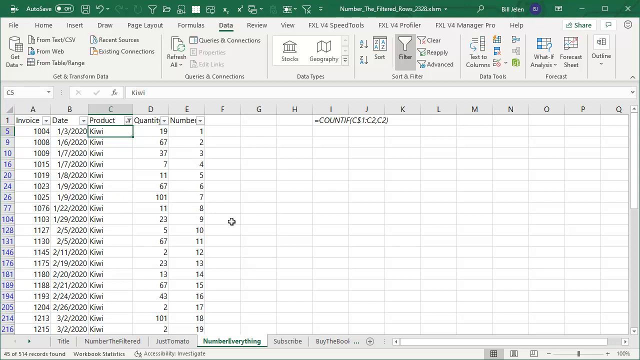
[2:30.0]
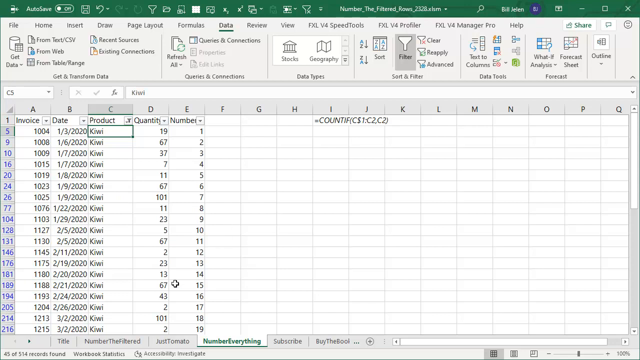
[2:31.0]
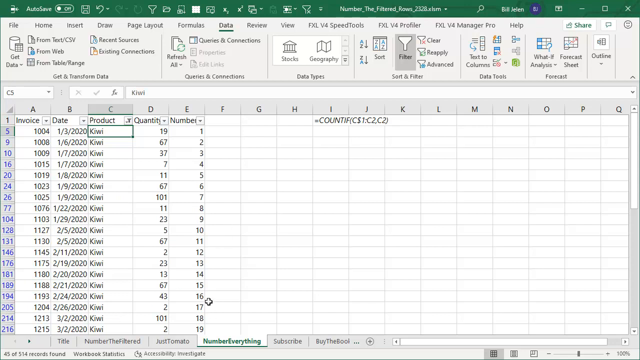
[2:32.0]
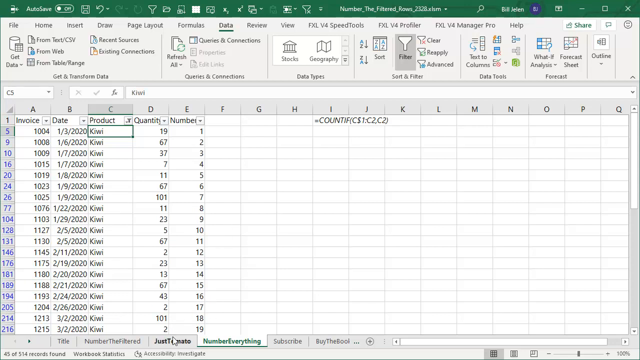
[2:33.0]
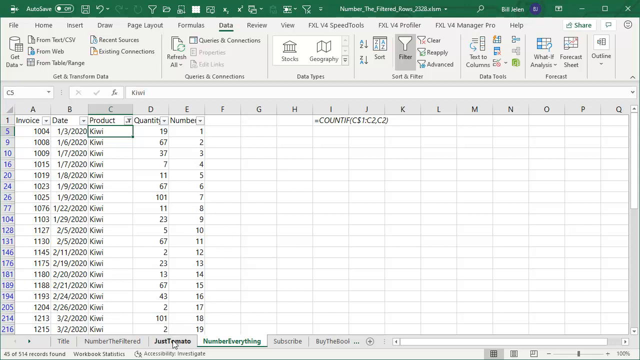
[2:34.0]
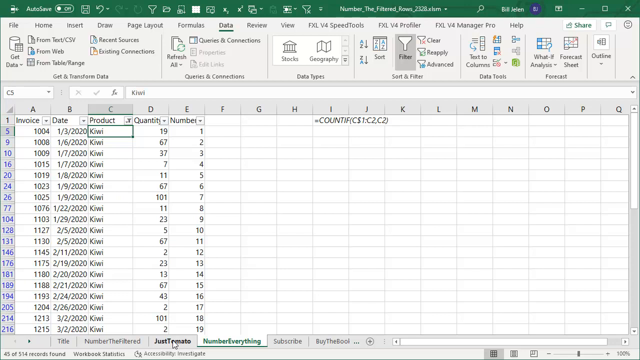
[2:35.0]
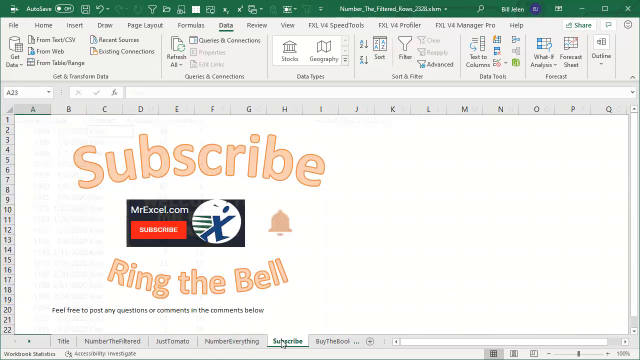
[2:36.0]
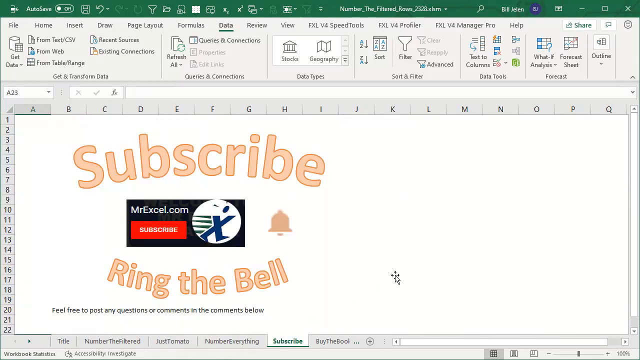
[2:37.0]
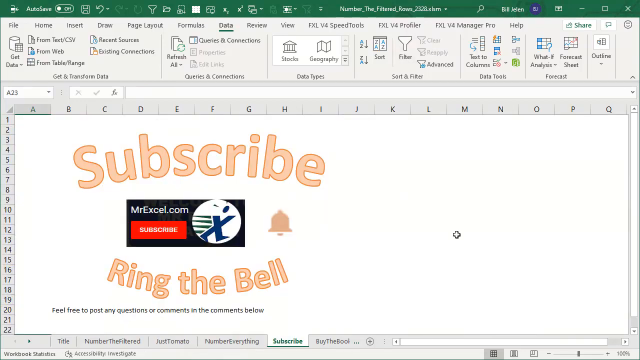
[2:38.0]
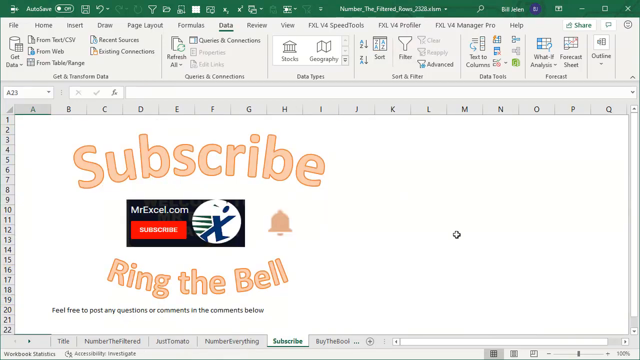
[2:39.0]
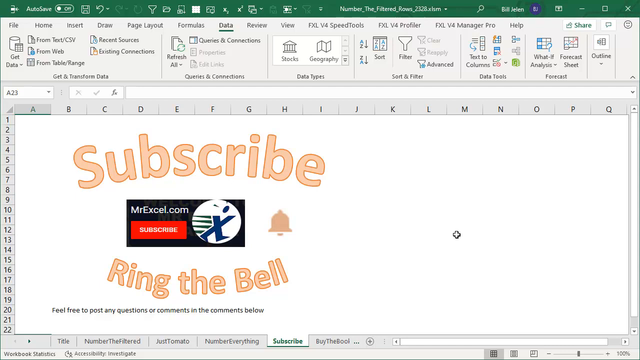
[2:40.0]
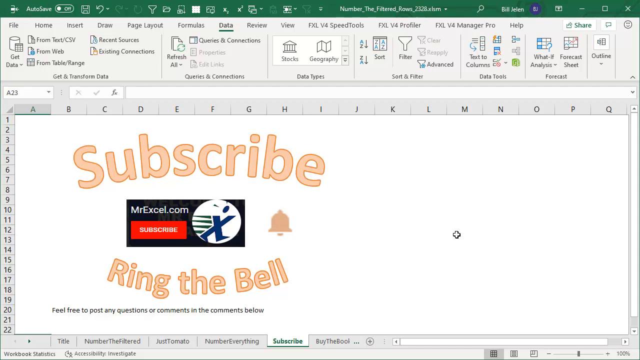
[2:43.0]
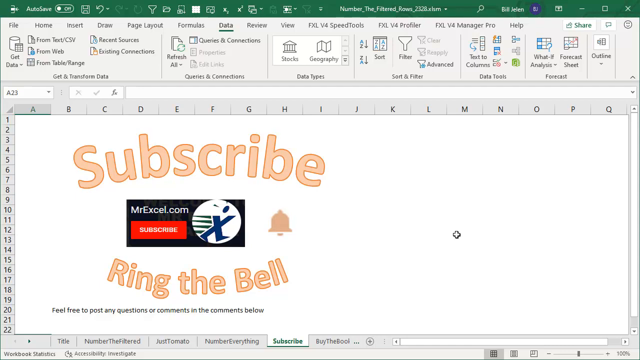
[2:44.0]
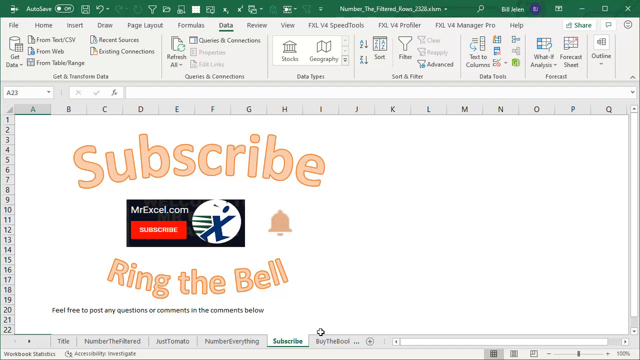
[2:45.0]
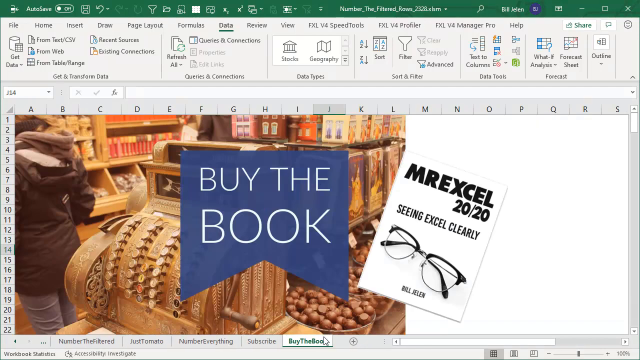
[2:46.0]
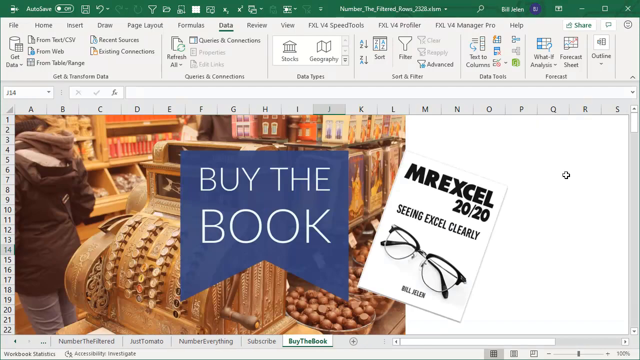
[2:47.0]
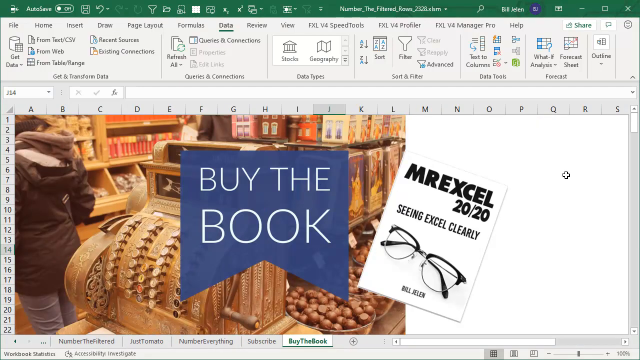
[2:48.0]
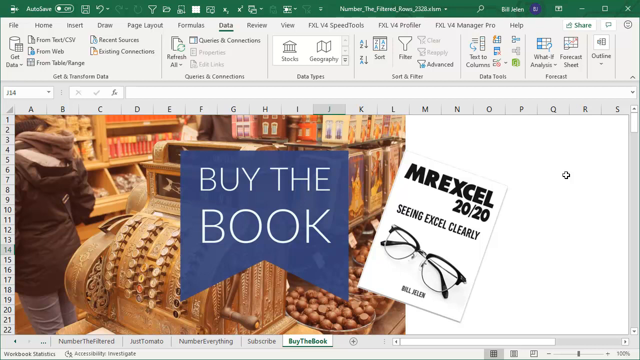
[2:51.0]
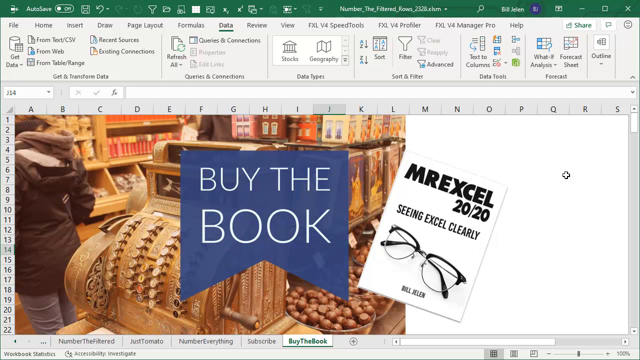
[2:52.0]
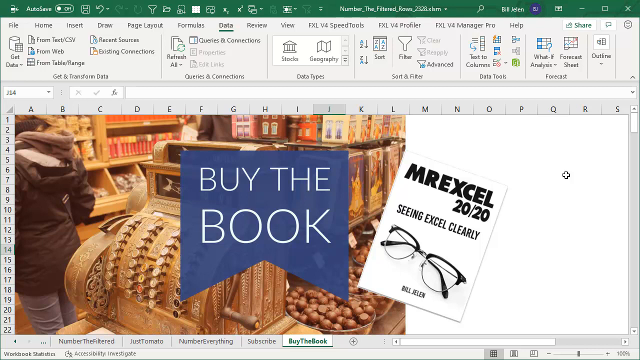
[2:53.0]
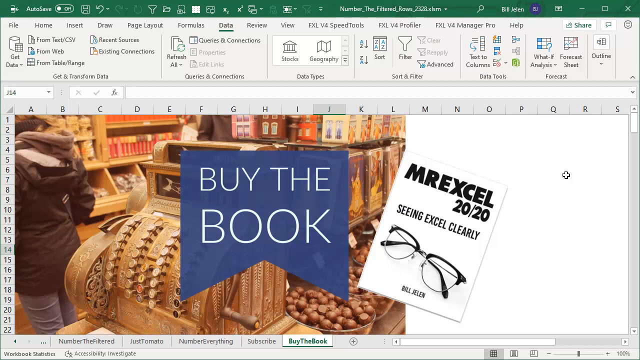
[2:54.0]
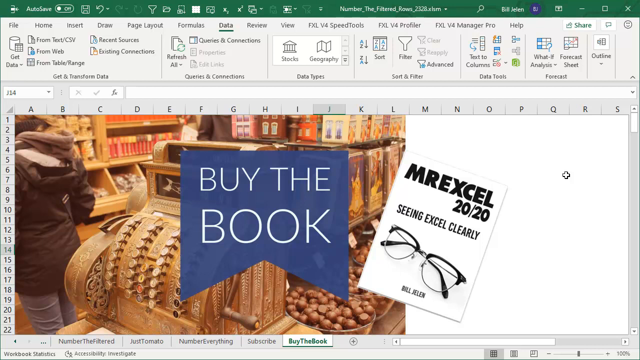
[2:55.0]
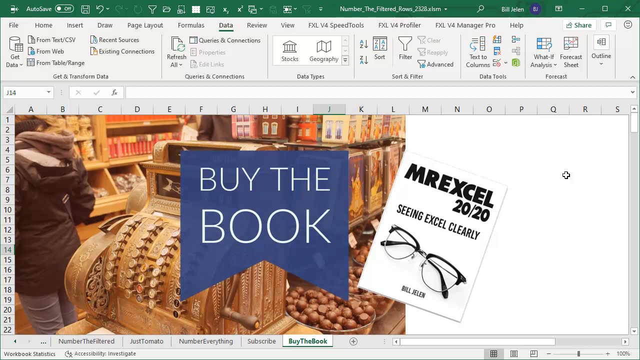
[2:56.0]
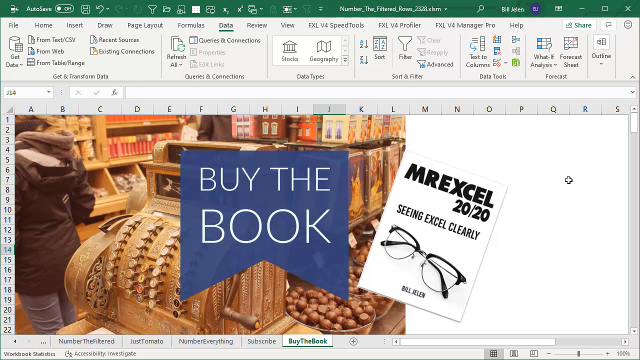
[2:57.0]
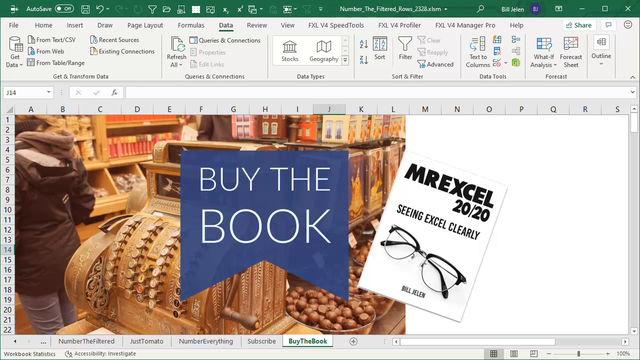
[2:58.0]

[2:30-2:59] He moves down to the left, circling over some of the cells toward the bottom, then goes down to the tabs and clicks the "subscribe" tab, which is second from the last. The tabs contain almost the same data from one to the next. On the subscribe tab, a curved, terracotta shape with darker red around it spans B1 through I1 and down through row 7; its middle reads "MrExcel.com" in white, with "subscribe" in white beneath it. There is a white oval with a blue X with streaks to its left and something like a head on top, almost looking like arms and legs. There is an alert bell button with the text "ring the bell" curving up. Below, in black text from B20 to H20, it reads "feel free to post any questions or comments in the comments below." He then clicks the last tab, "by the book," shown in a bookmark-like blue shape. Behind it is a picture of what looks like a market with people: an old, kind of gold cash register with many buttons and a crank on the right side, a couple of buckets of nuts and shells, and shelves in the back. Someone is in the aisle on the left, and someone in a black coat is to the left of the cash register. To the right of "by the book" is a poster-like image tilting to the right reading "mr. Excel 2020" and "seeing Excel clearly," with a picture of glasses.